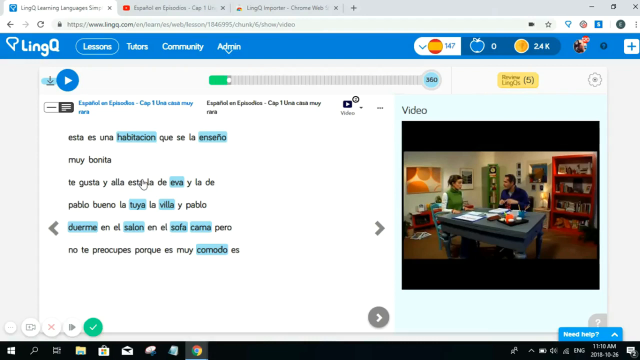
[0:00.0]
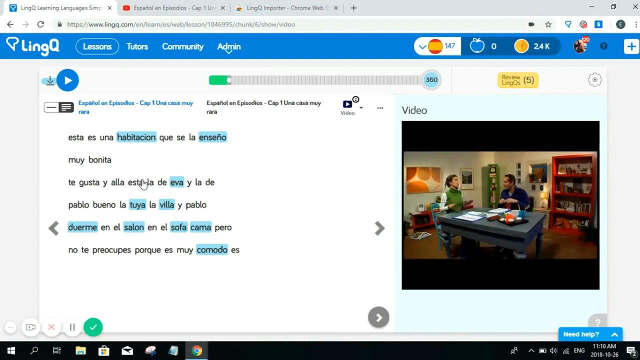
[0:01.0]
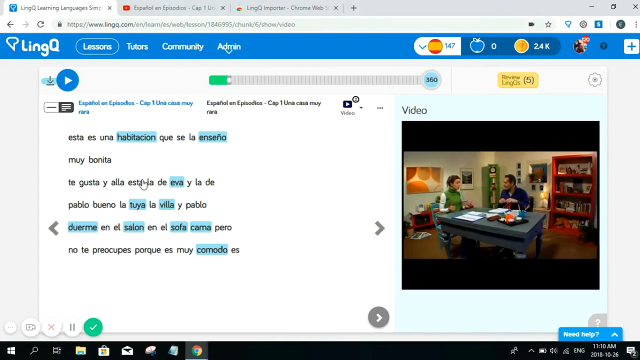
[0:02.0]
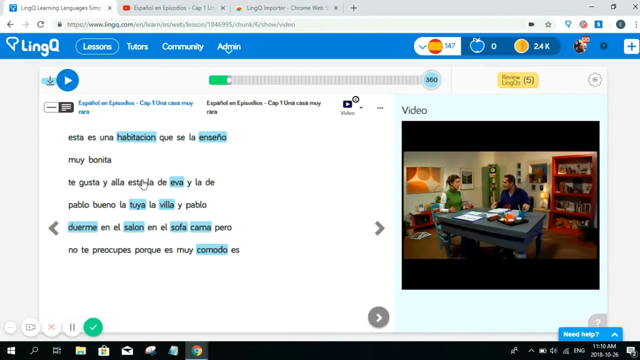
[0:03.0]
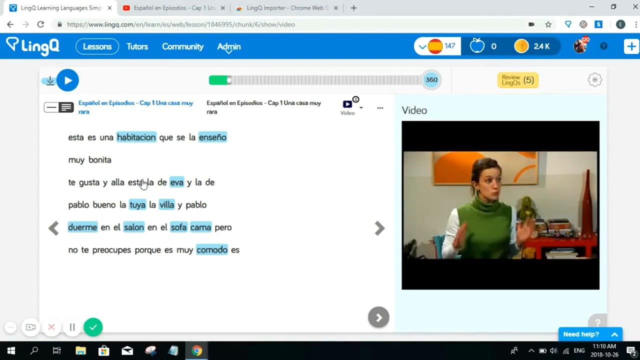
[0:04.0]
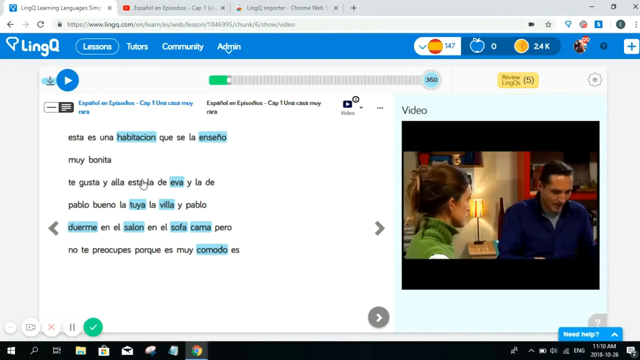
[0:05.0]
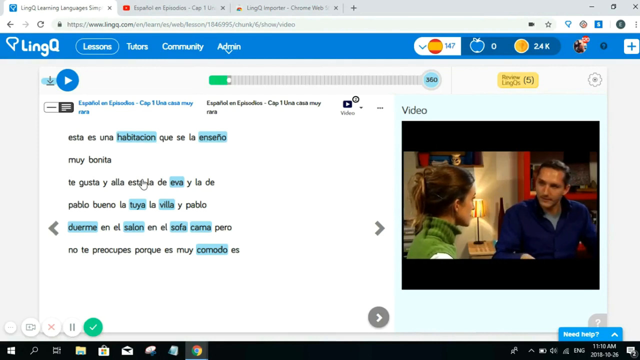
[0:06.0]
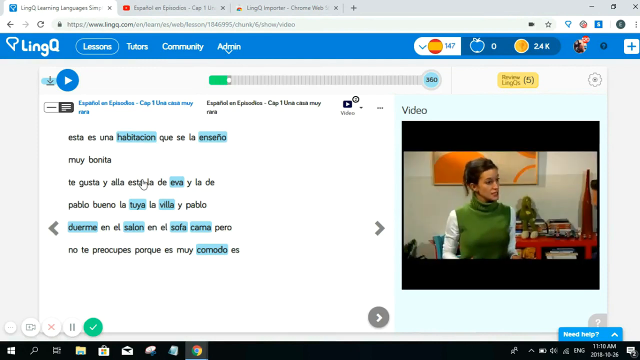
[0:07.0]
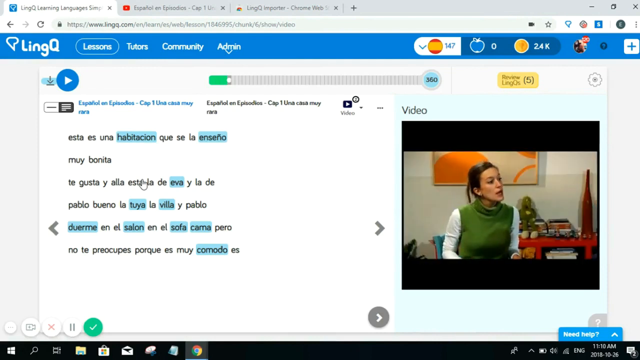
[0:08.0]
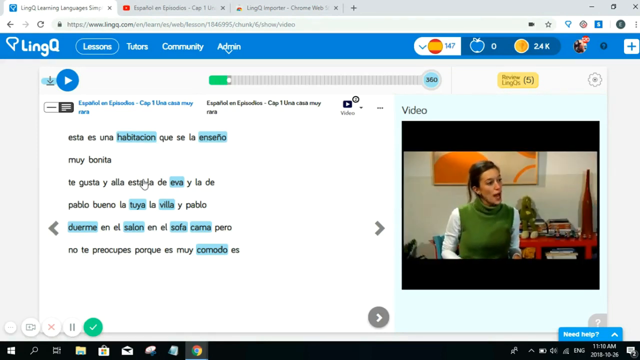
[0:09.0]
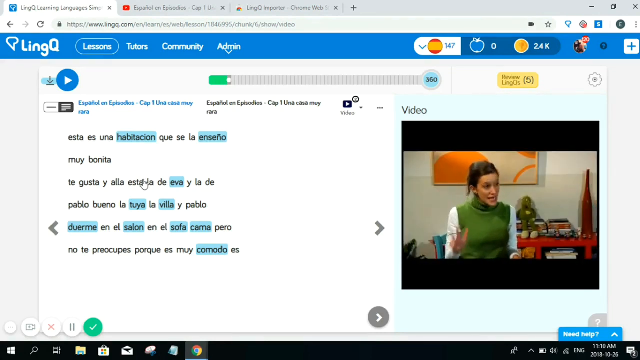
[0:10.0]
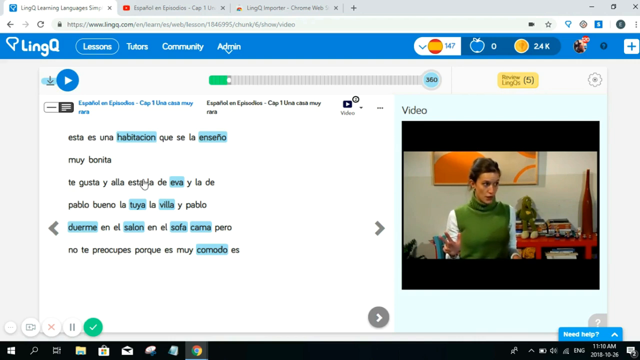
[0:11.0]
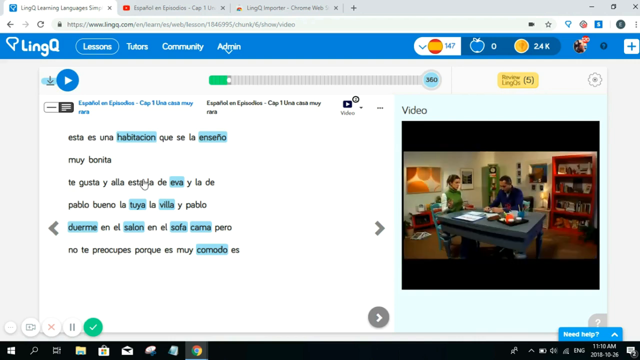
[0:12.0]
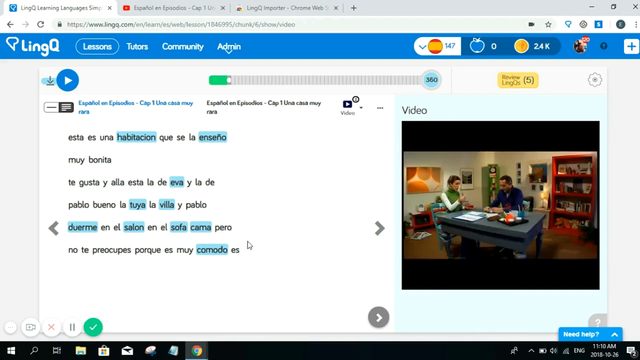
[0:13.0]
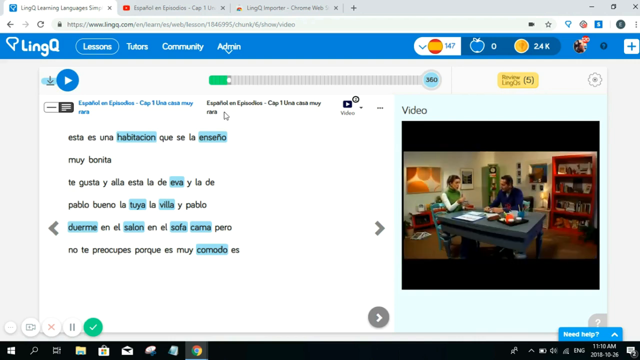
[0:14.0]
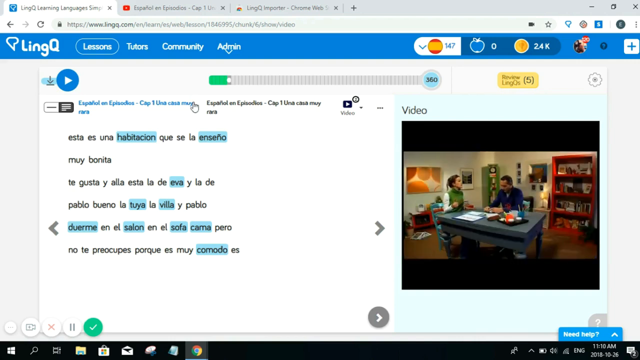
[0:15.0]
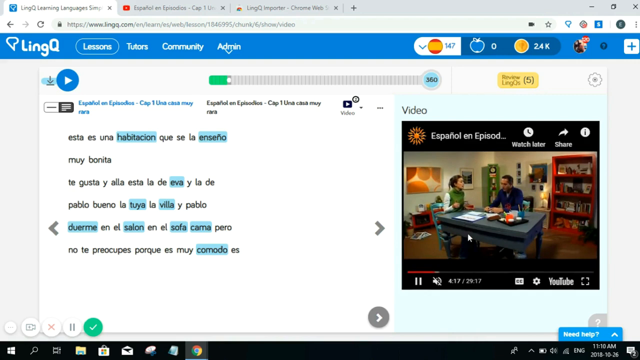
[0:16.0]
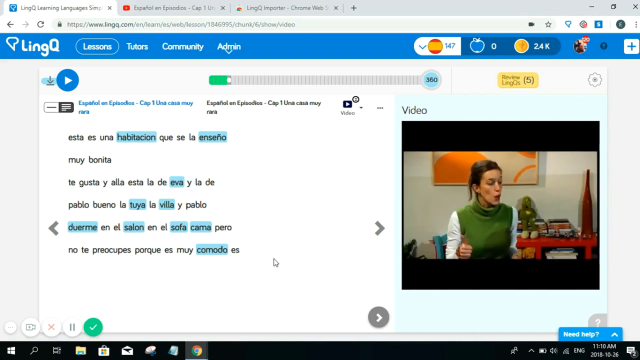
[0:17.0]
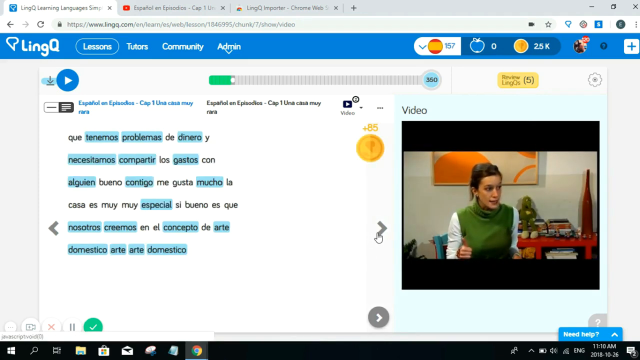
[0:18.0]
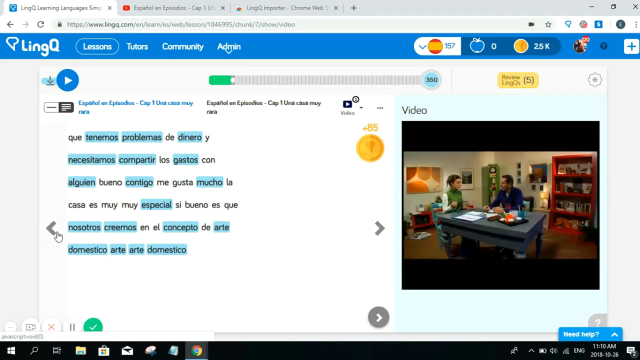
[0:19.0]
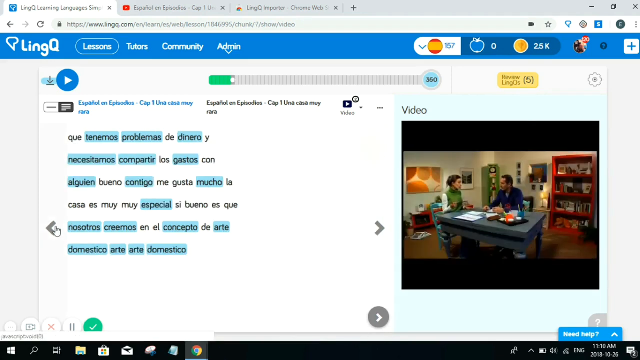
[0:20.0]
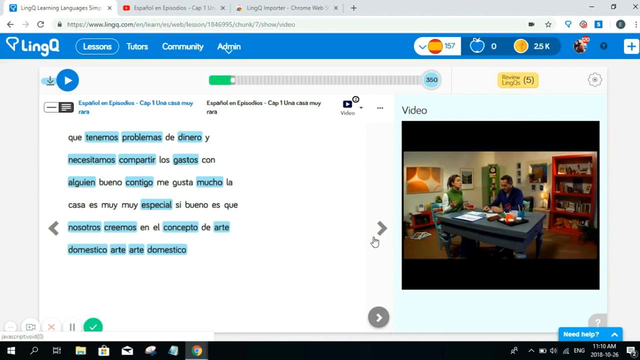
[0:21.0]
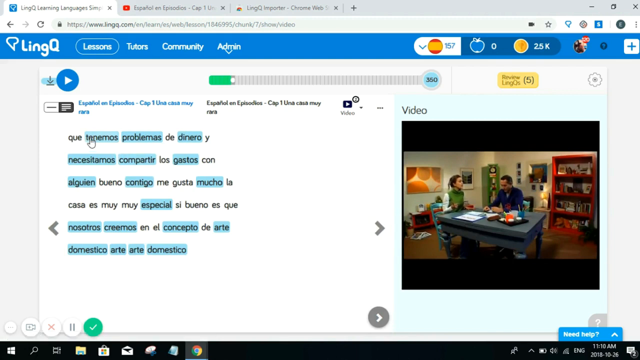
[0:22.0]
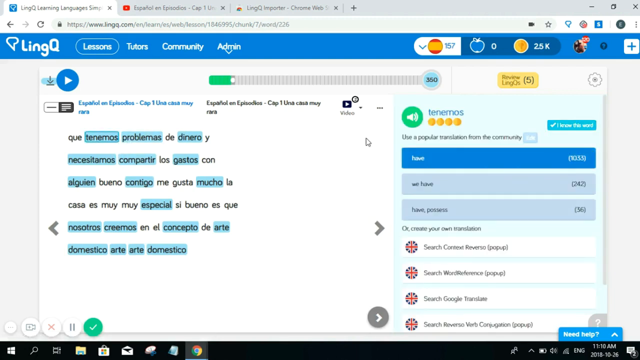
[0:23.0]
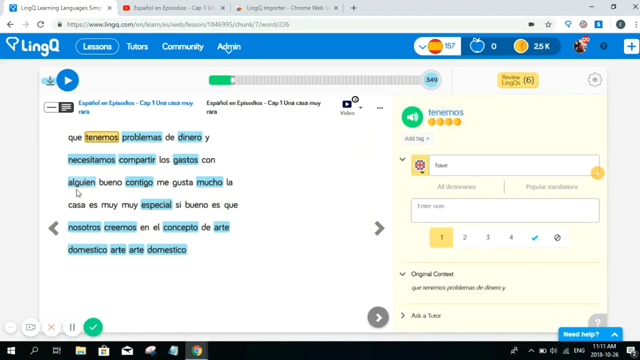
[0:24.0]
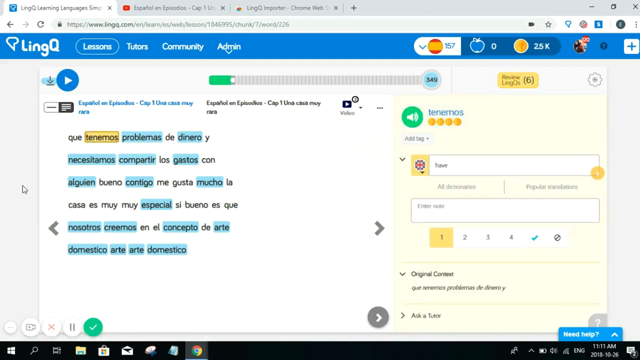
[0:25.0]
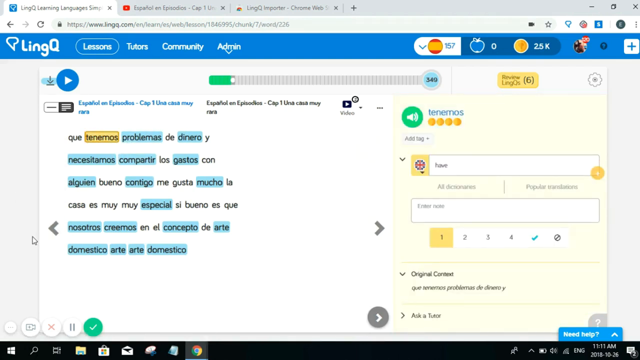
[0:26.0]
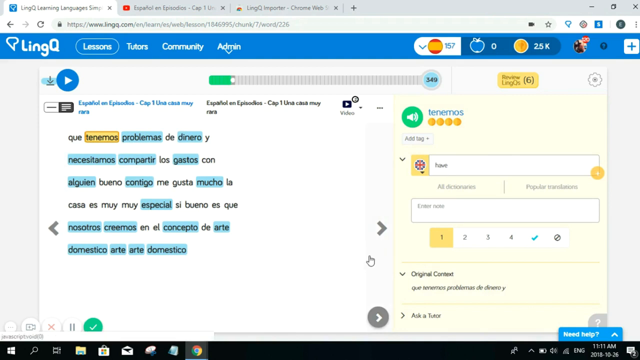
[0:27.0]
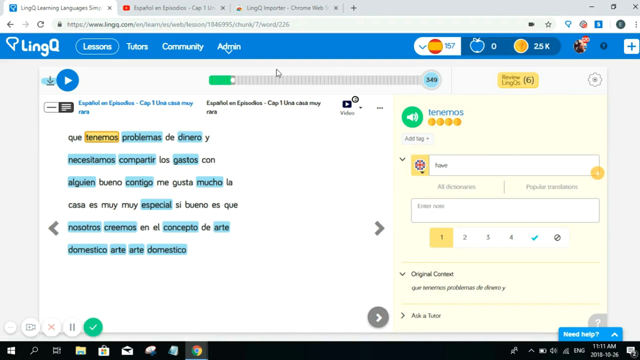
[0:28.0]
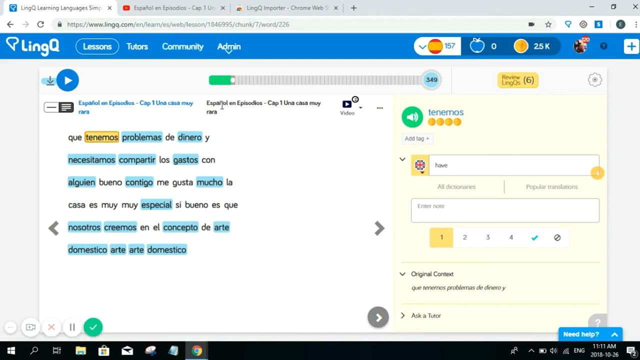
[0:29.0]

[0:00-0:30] A web page for the website Lingq is open in a browser, with a couple of other tabs open, including one for Español and a Lingq importer. The layout looks almost like Facebook's. The Lingq logo is in the top left-hand corner, and next to it are several selectable buttons: Lessons, Tutors, Community and Admin. To the right of those are three symbols: a round red ball with a yellow stripe around the middle, what appears to be a blue apple, and to the right of the apple what looks like possibly gold coins, with "2.4 K" next to them. To the right of the coins is what appears to be a person's profile picture. On what may be the home feed, there is a paragraph written in Spanish.